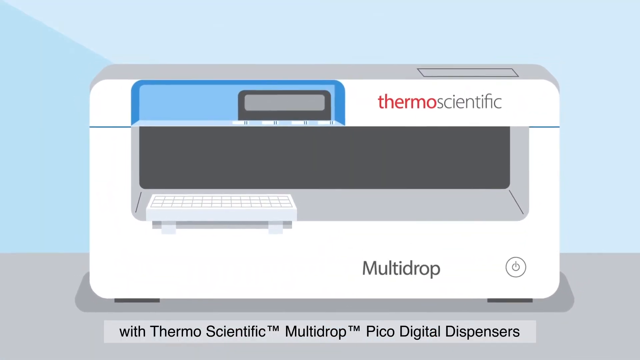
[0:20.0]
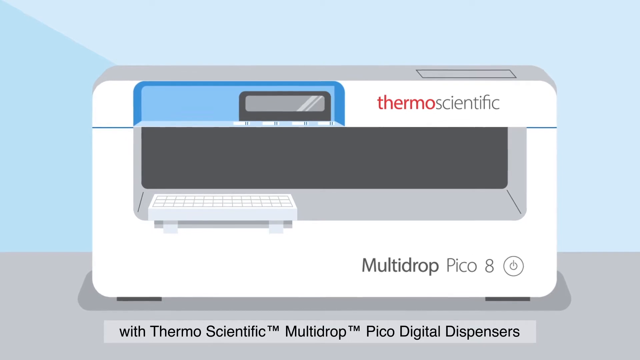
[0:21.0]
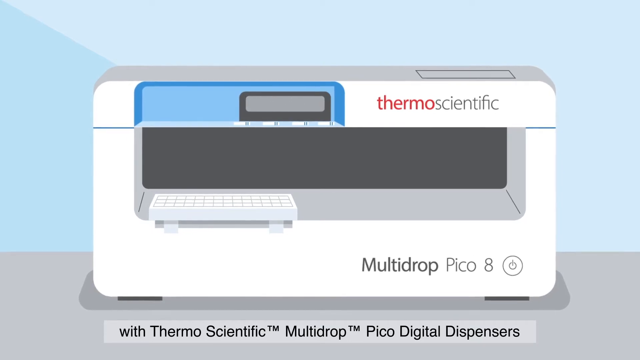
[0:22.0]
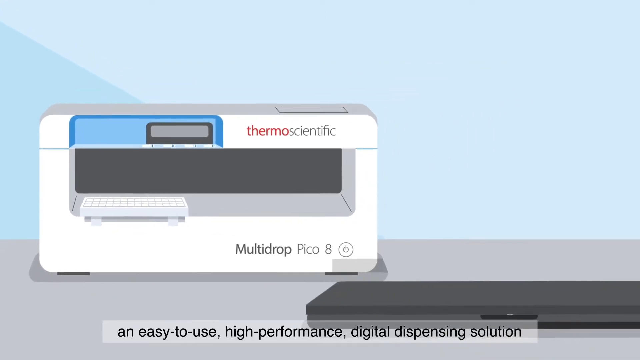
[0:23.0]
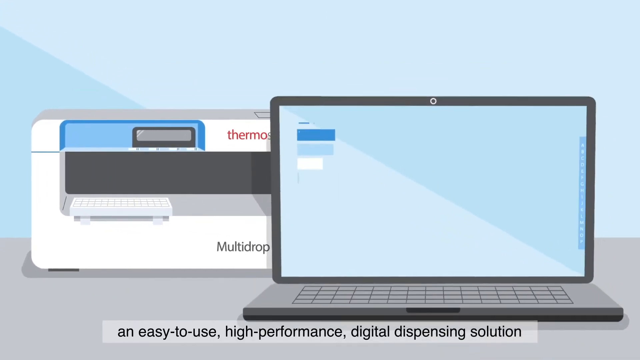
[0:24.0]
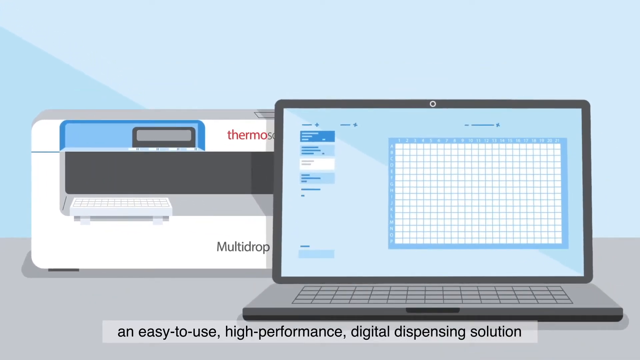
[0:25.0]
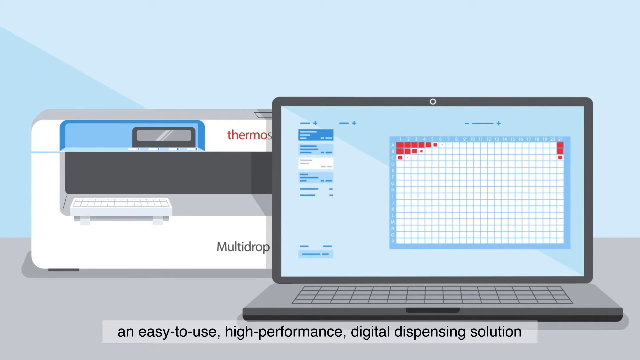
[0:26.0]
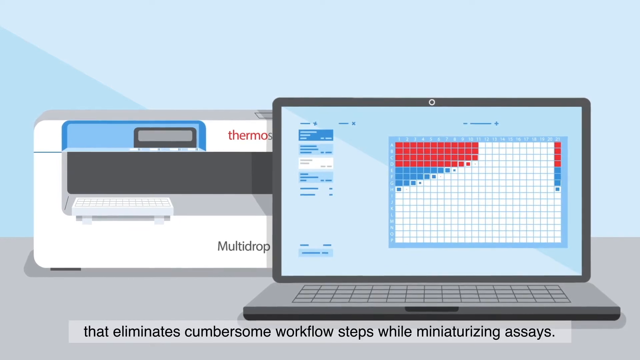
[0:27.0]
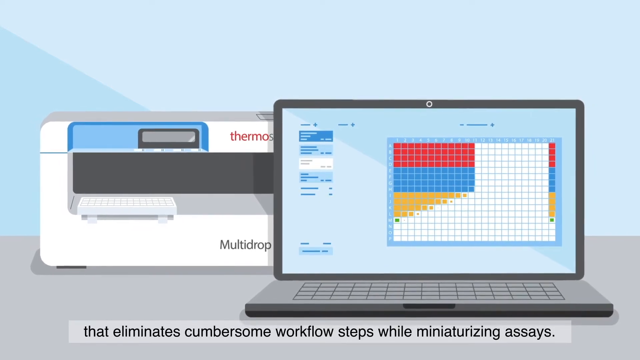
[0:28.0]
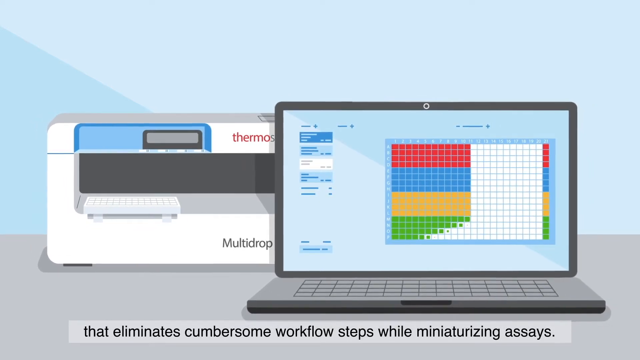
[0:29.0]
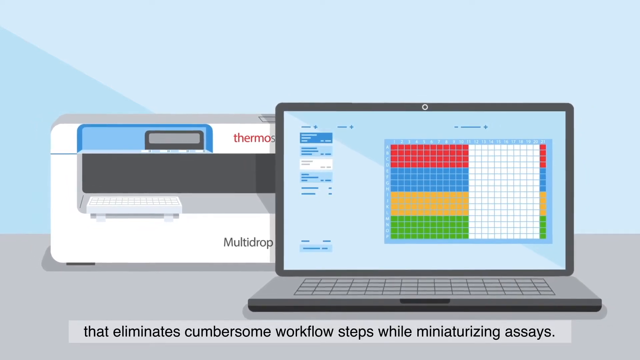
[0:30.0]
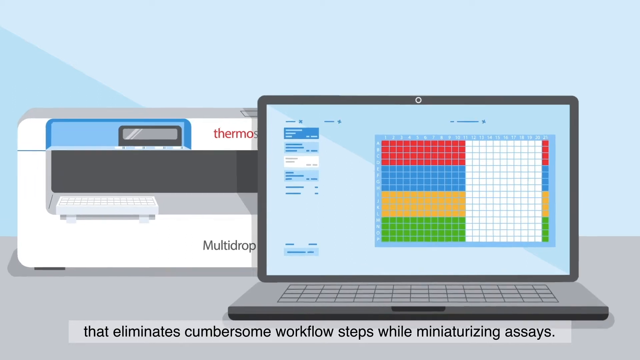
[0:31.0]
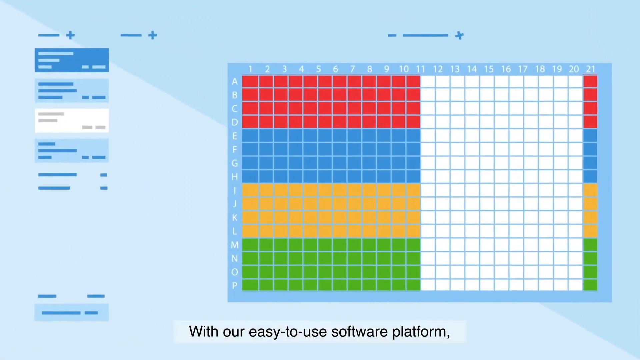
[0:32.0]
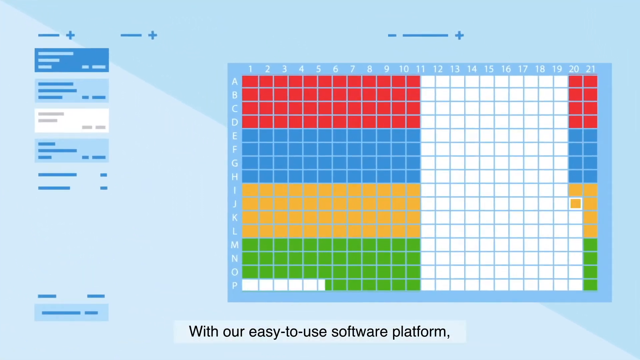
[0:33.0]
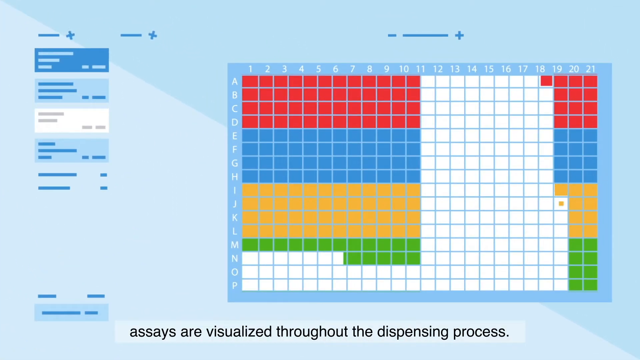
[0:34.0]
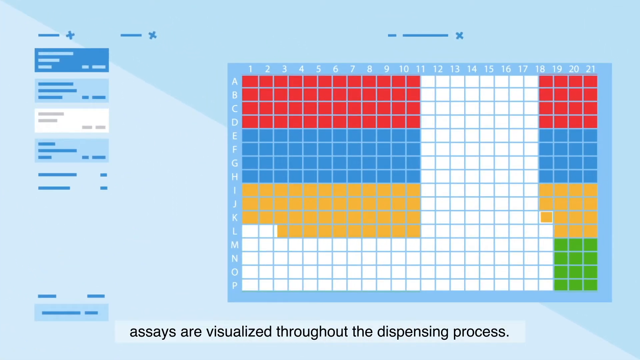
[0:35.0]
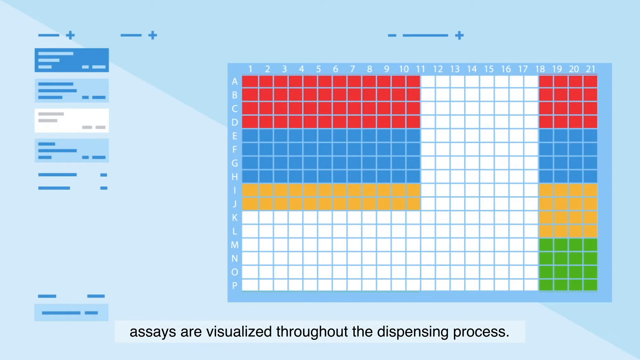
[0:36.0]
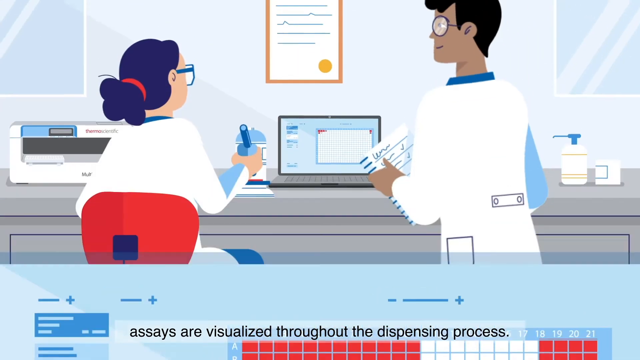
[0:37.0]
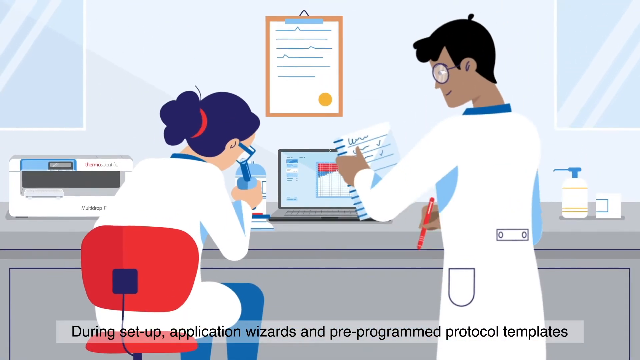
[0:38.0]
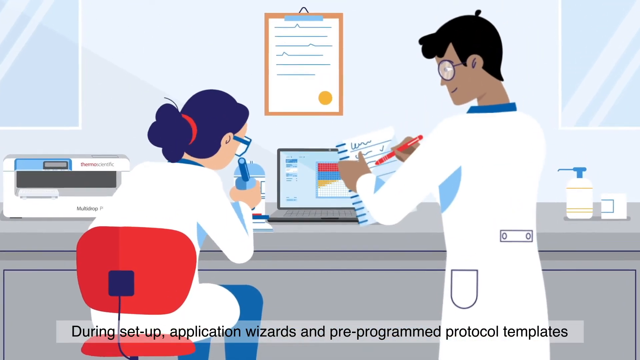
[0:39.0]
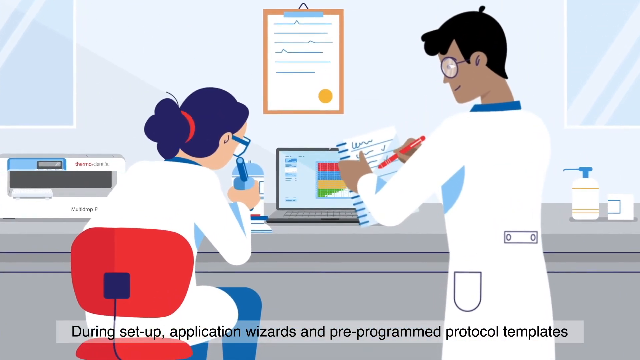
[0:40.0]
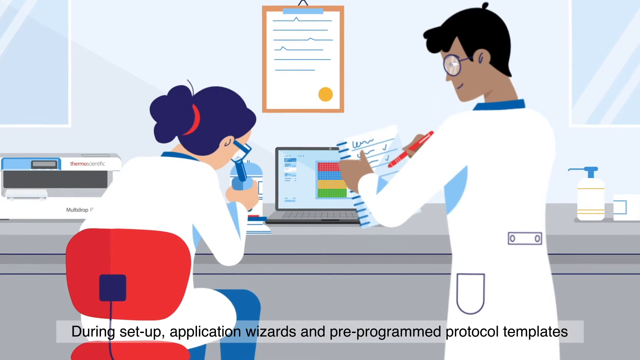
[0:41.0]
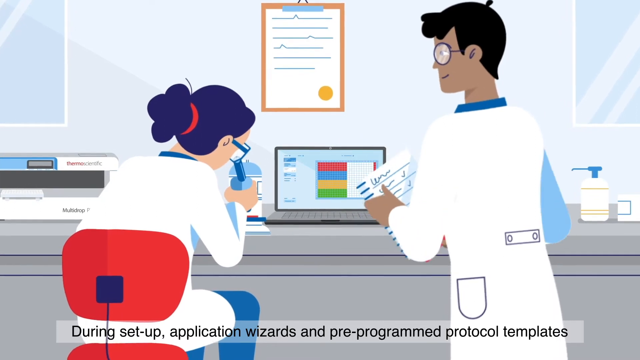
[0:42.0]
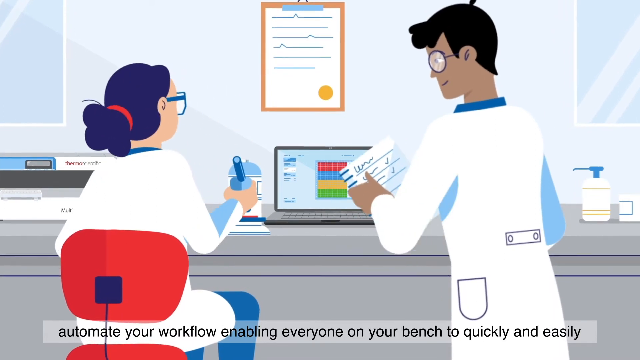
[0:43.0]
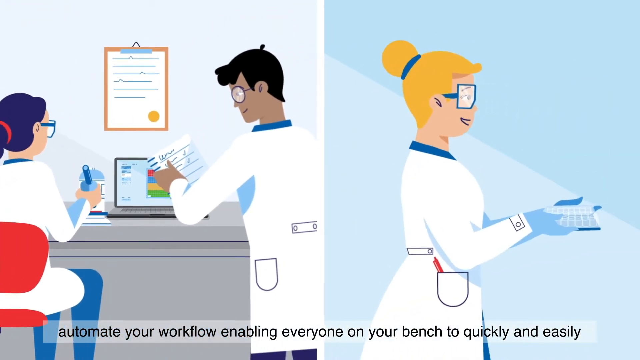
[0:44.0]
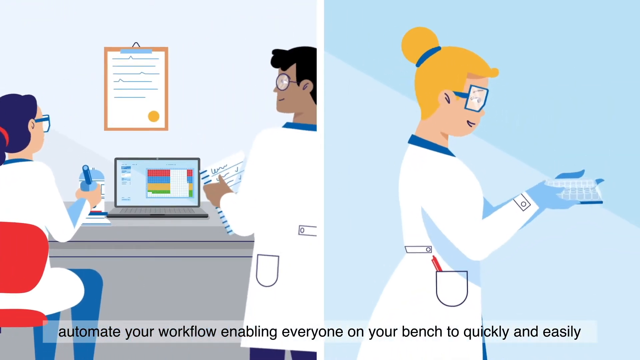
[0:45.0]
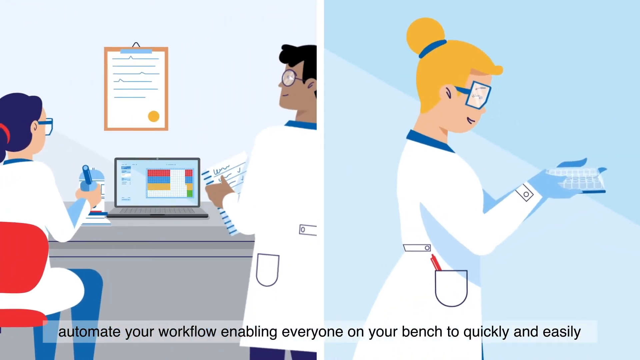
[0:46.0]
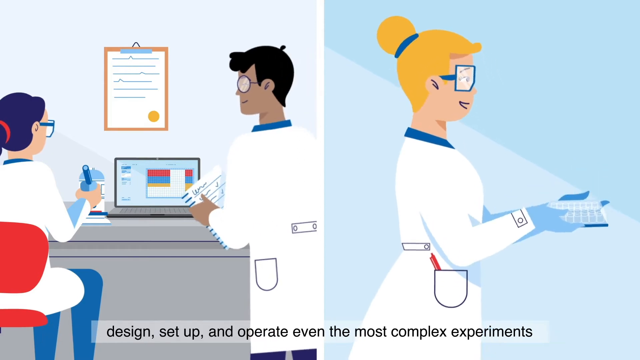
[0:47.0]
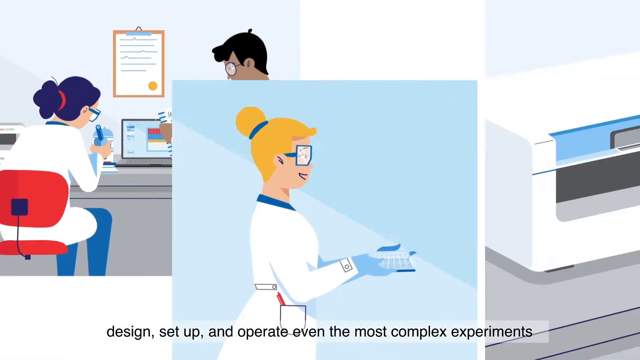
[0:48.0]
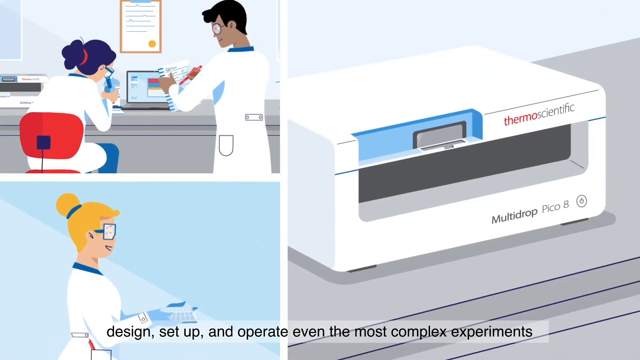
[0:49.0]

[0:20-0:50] A cartoon-style illustration shows some kind of machine labelled "thermoscientific", with the word "multidrop" at the bottom and a power button on the bottom right. The machine is sitting on a gray table, and there is a light blue wall. At the very bottom of the screen, blue text reads "with thermoscientific™ multidrop™ Pico Digital Dispensers". The camera zooms back a tad and shows a cartoonish laptop sitting on the same gray table. Its monitor shows some kind of chart that fills up with red, blue, yellow and green squares, and then the chart rearranges the colored squares in different arrangements. The illustration then shows two people, a male and a female. The female has blue hair in a ponytail with a red ribbon or tie in it and wears glasses with blue frames. The male has dark hair and wears glasses. They are both wearing lab coats.